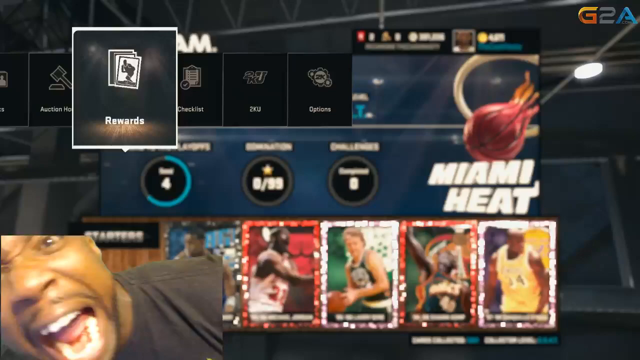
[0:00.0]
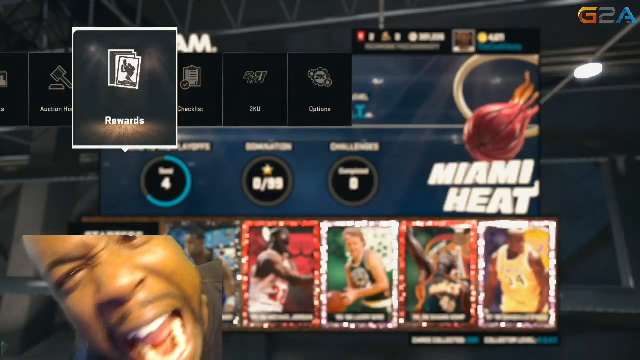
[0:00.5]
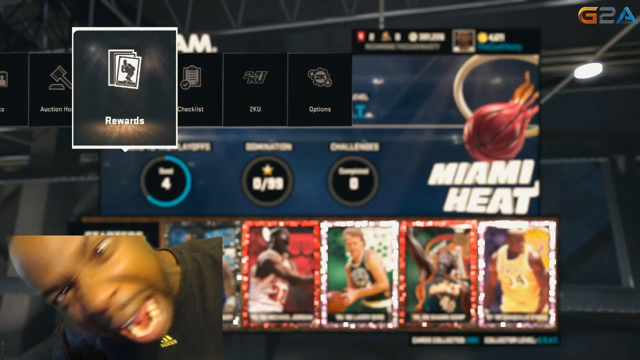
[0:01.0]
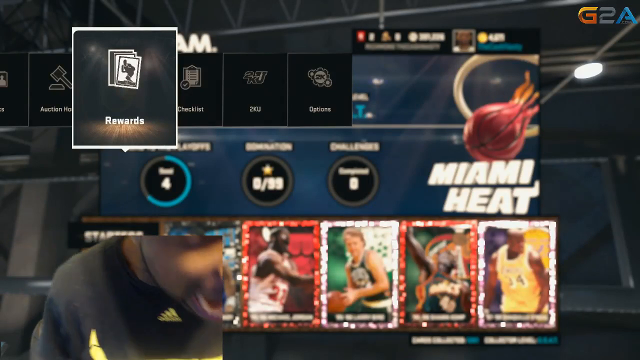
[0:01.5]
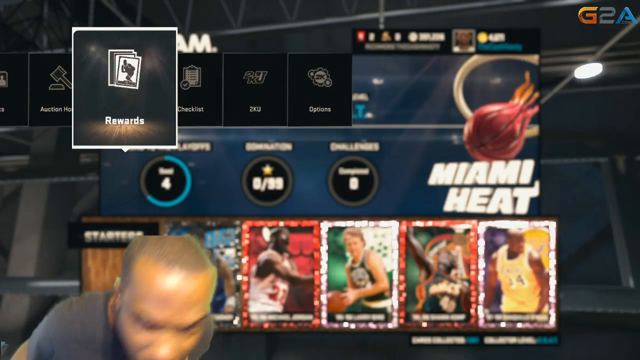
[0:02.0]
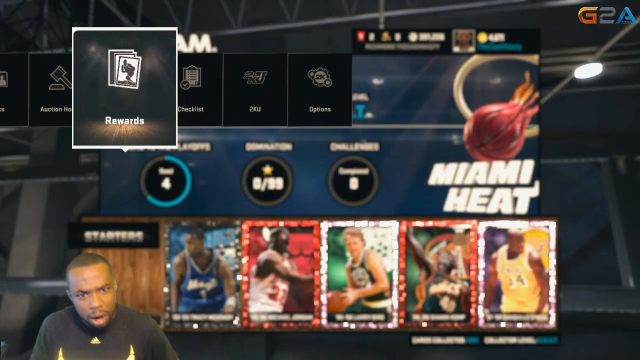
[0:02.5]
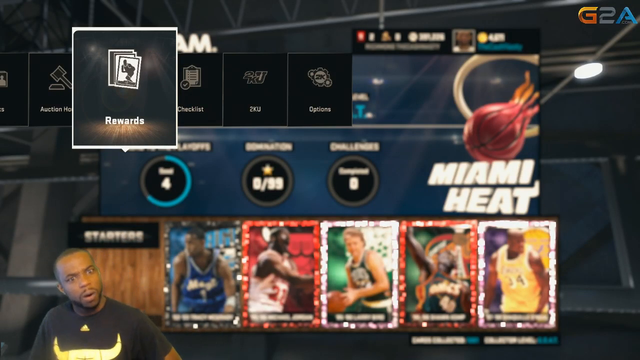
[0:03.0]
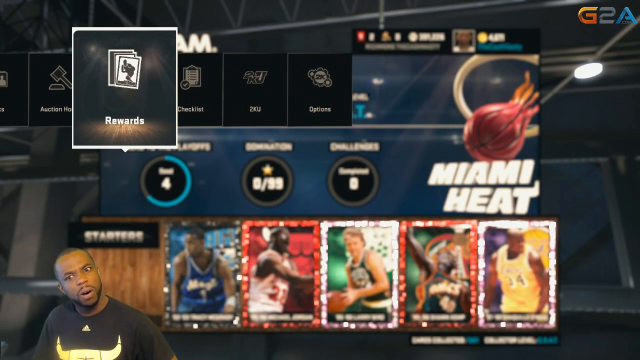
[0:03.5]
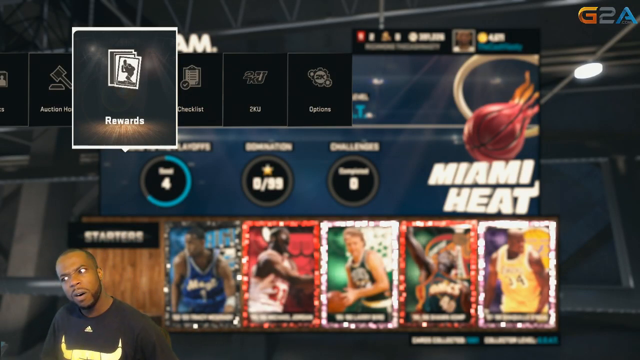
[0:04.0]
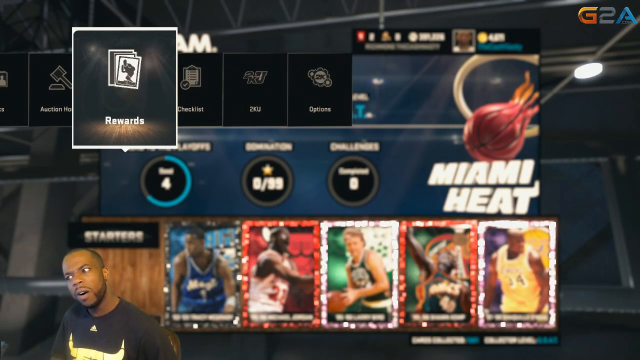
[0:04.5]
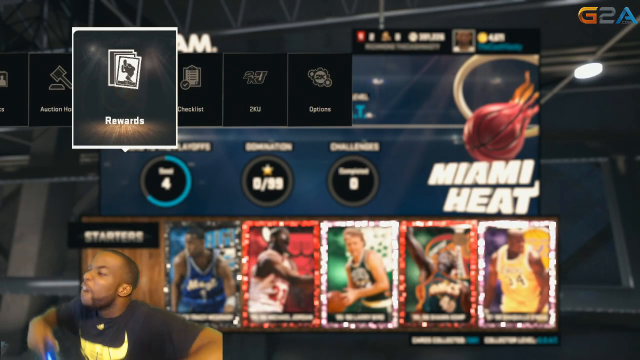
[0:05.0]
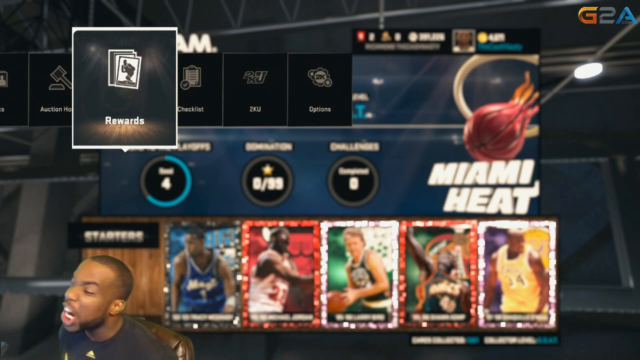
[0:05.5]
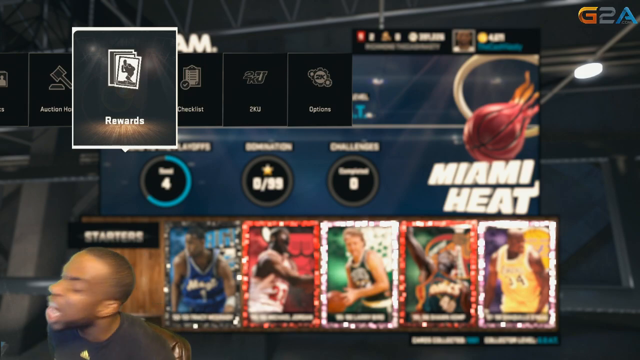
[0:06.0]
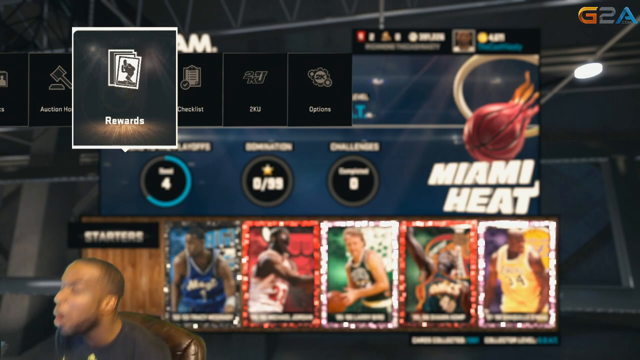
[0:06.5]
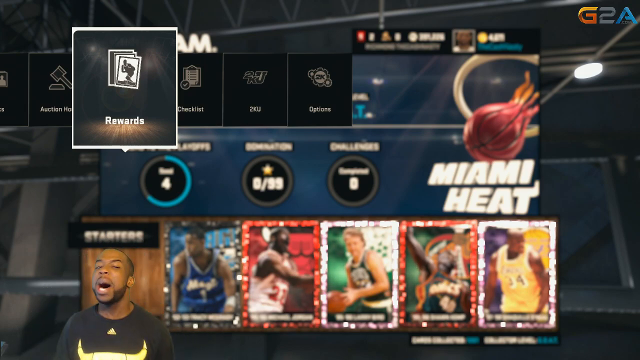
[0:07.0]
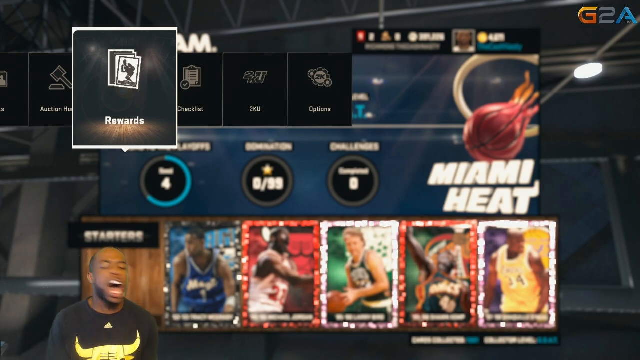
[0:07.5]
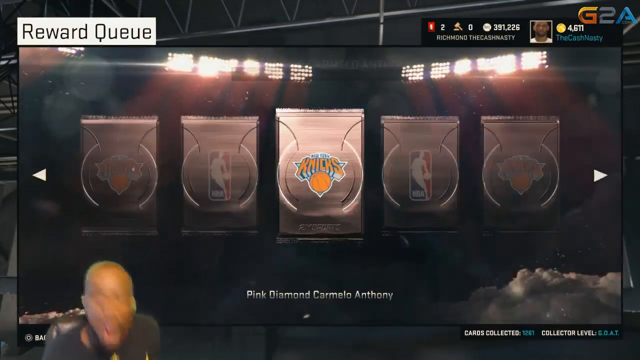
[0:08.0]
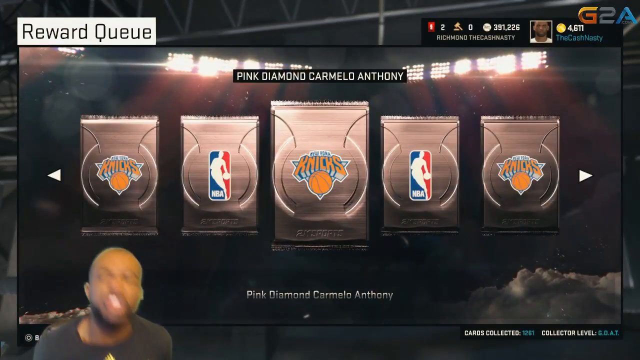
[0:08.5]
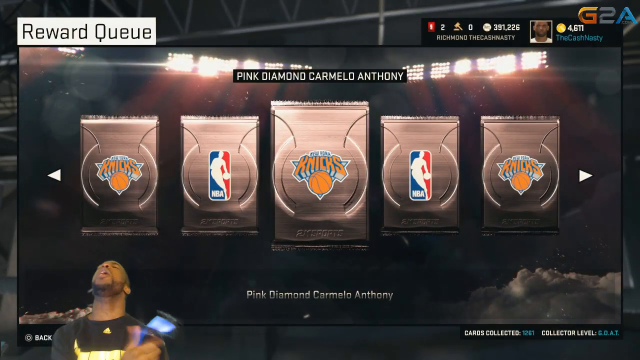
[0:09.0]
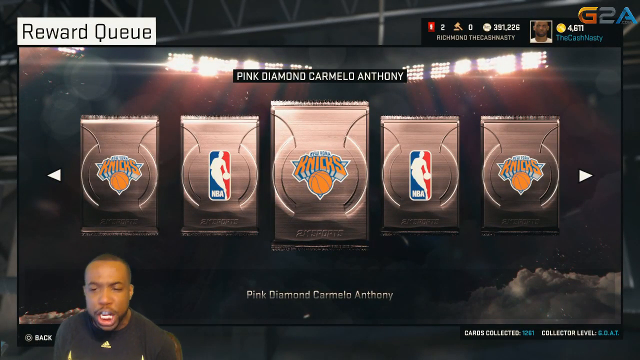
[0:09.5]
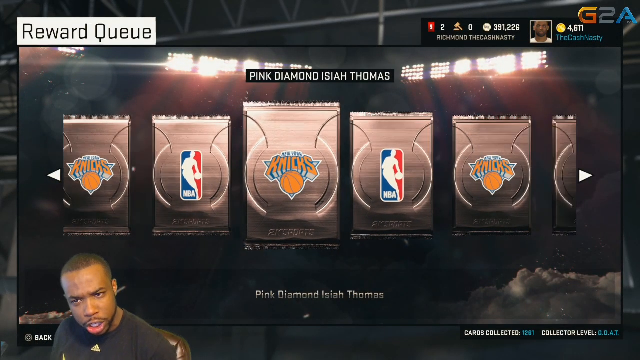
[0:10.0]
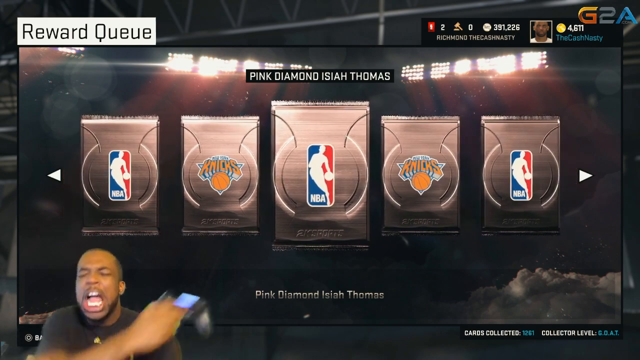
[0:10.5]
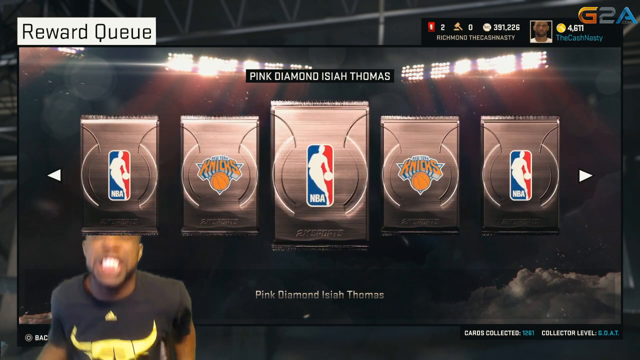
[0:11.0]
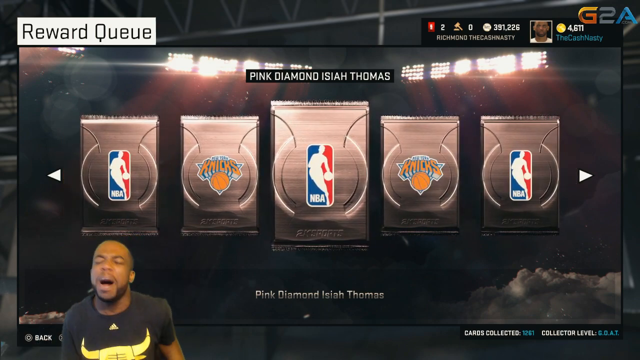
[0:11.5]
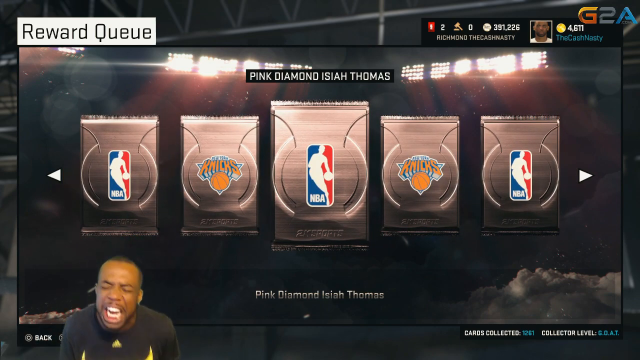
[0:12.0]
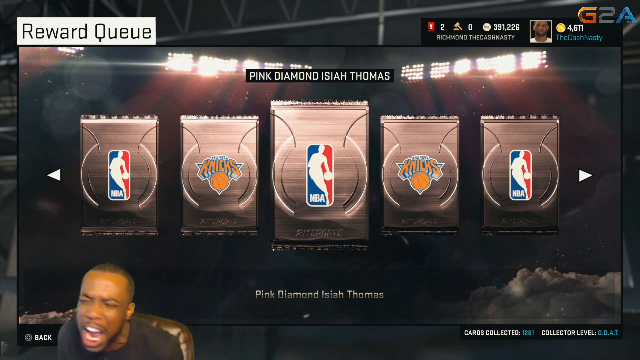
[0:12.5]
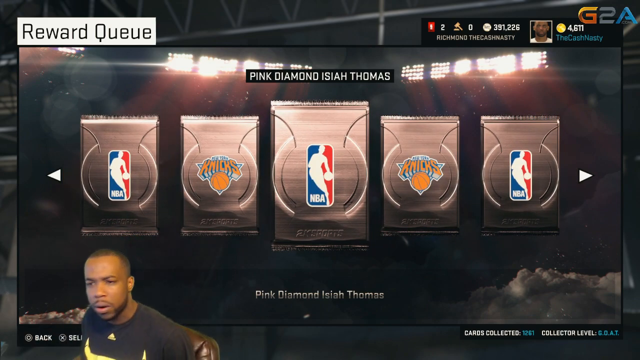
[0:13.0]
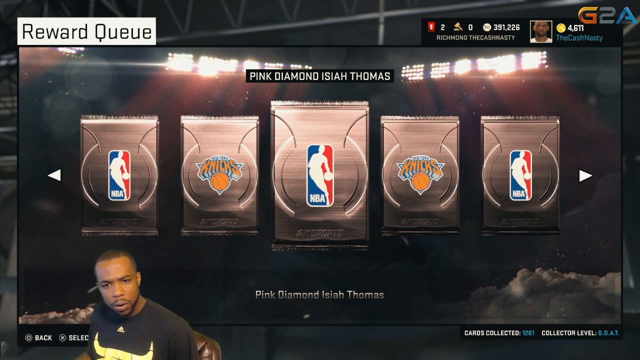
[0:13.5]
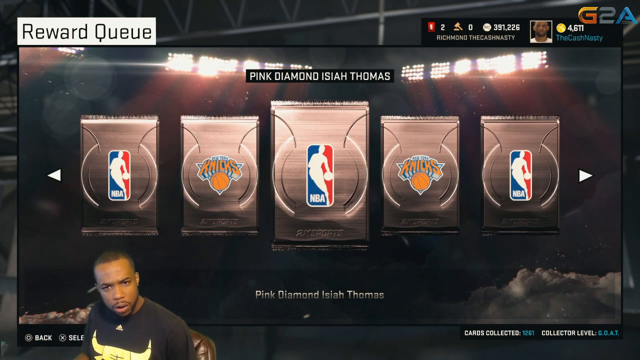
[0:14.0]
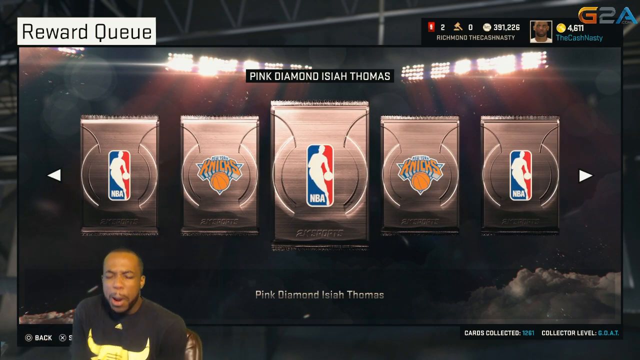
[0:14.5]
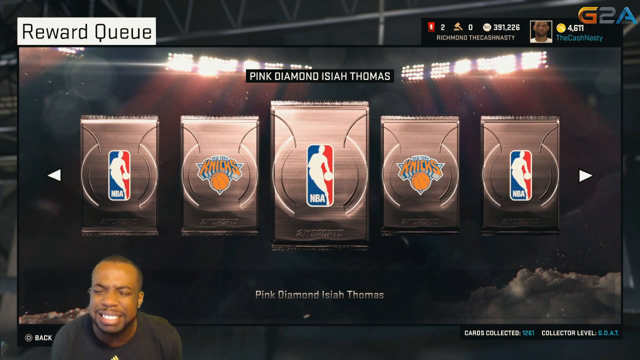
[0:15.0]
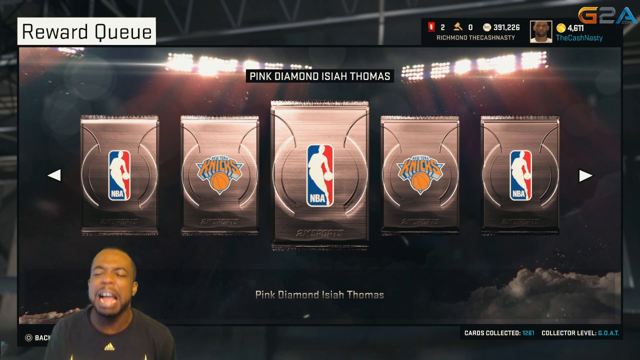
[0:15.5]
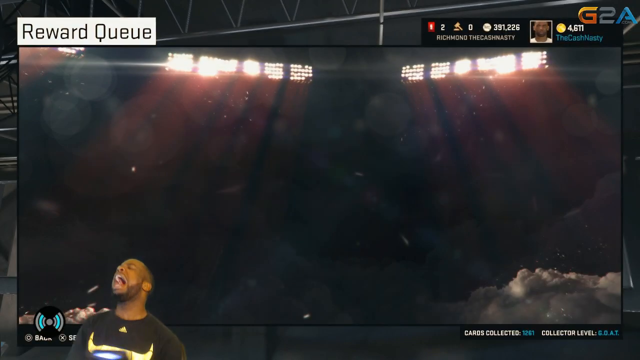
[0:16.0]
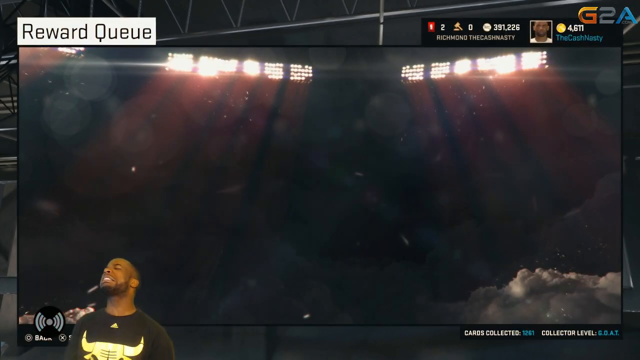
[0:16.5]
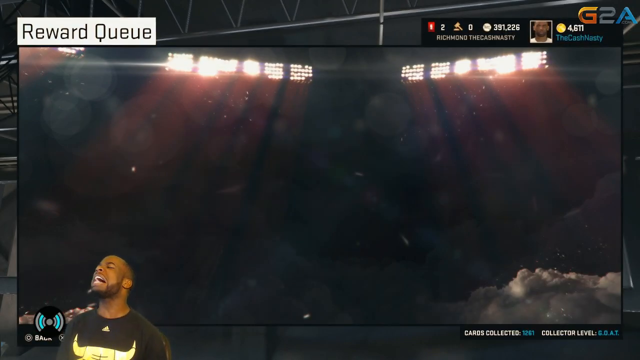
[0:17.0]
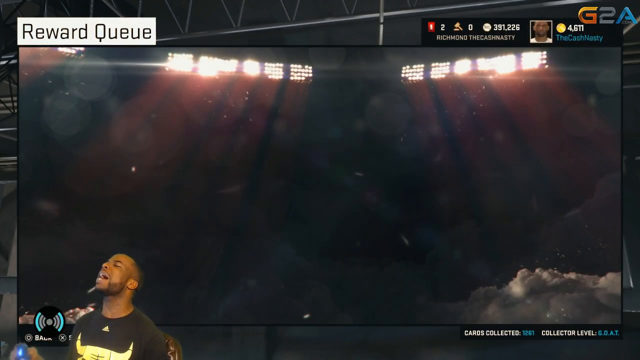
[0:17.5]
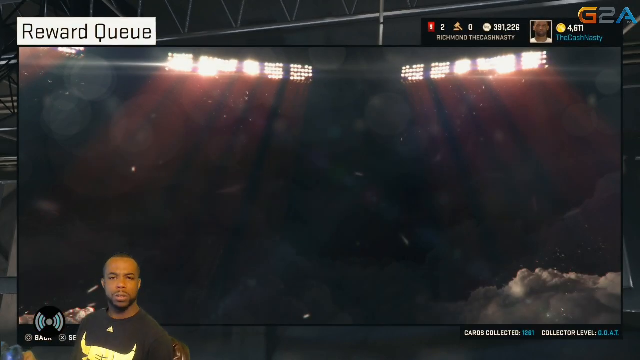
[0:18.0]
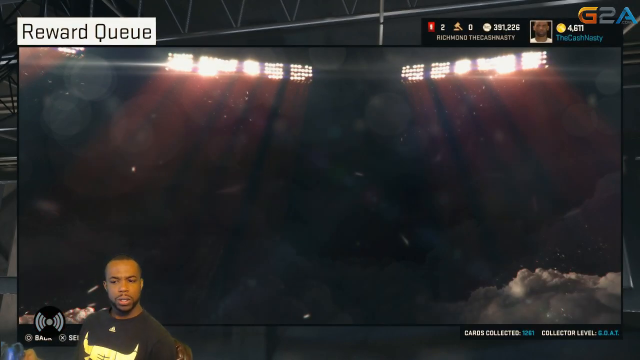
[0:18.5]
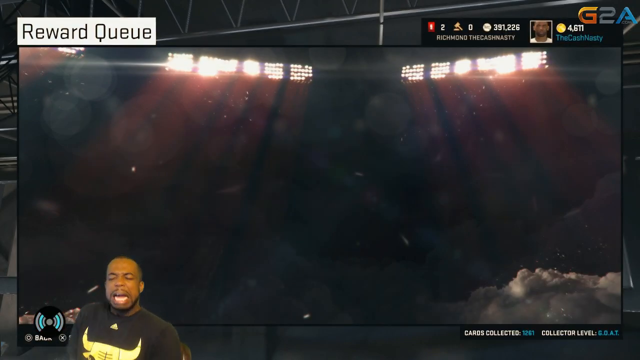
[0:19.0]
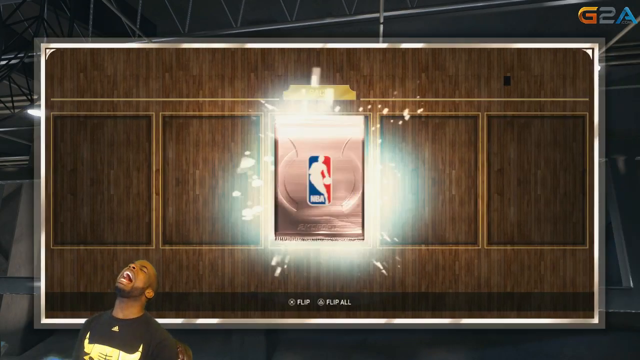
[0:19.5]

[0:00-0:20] A scene from a sports video game fills the screen, identified in the upper right as G2A, with overall colors of dark black and dark blue. The screen is divided into roughly three horizontal areas: near the top are panels that say things like "action", "rewards", "checklist" and "options"; the center band contains scores and progress; and the bottom band contains what looks to be trading cards for NBA stars. Text in the right center of the screen announces a team affiliation, showing the logo and name of the NBA team the Miami Heat. A man appears in miniature form in the lower left of the screen: he is African American, in his 20s, with short hair and a nicely trimmed goatee, and he speaks animatedly into the camera. The screen changes to logos for other NBA teams, showing the New York Knicks logo at one point and the NBA logo at another. Isaiah Thomas' name appears in the caption, and at the top of the screen is a motif of lights, as if over a night basketball game.